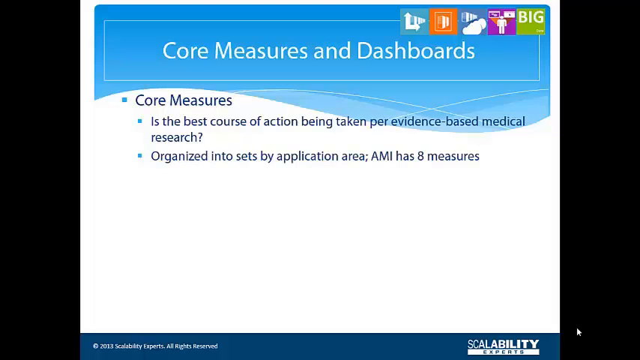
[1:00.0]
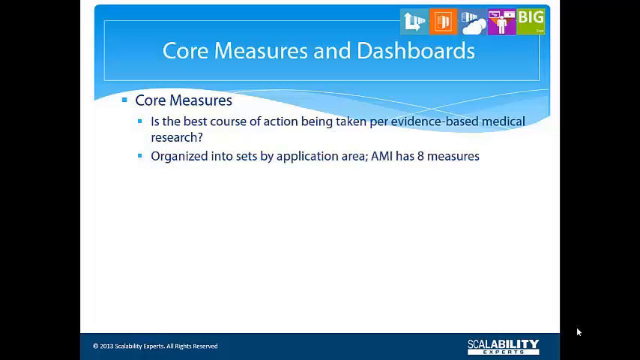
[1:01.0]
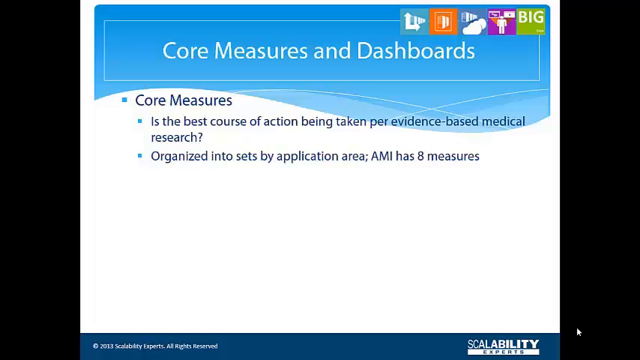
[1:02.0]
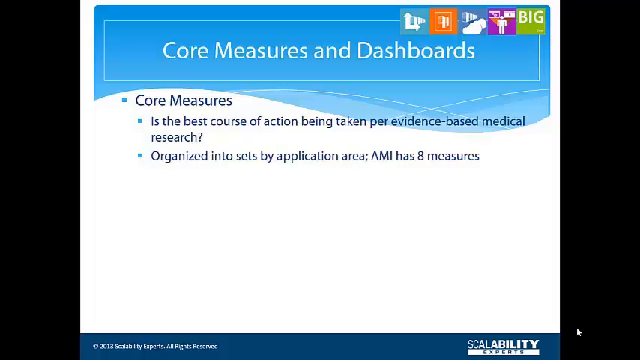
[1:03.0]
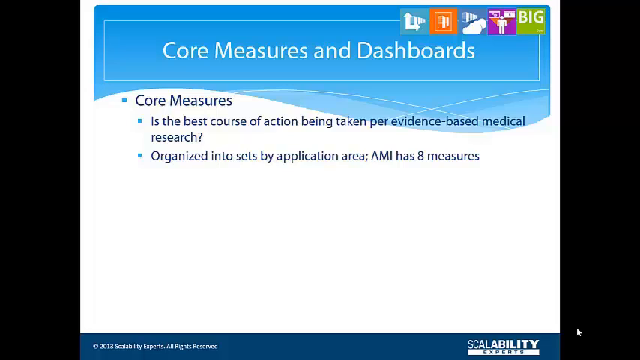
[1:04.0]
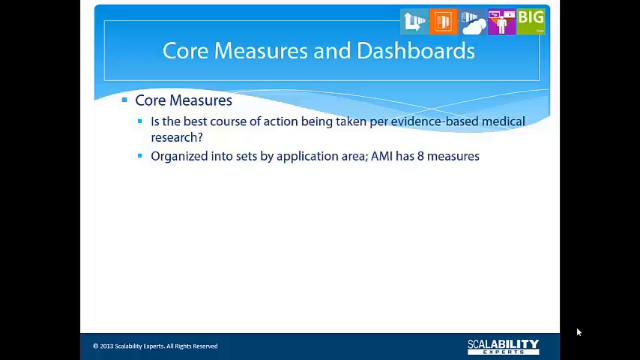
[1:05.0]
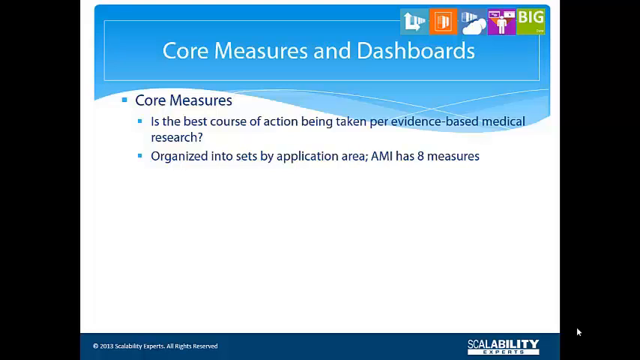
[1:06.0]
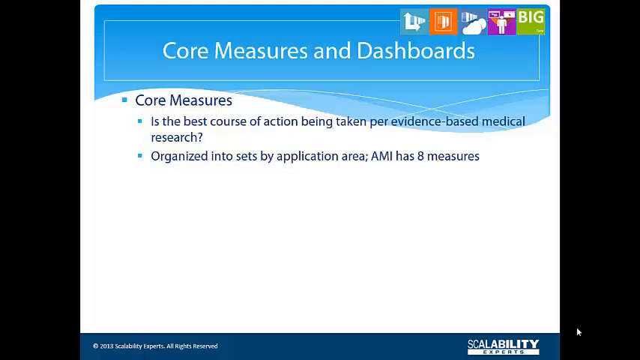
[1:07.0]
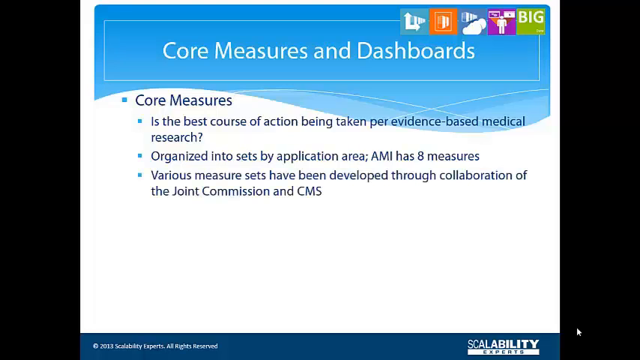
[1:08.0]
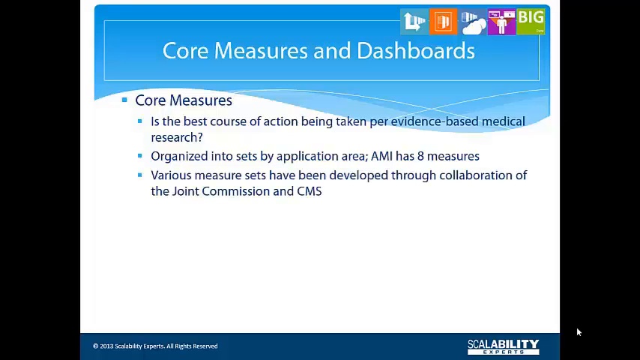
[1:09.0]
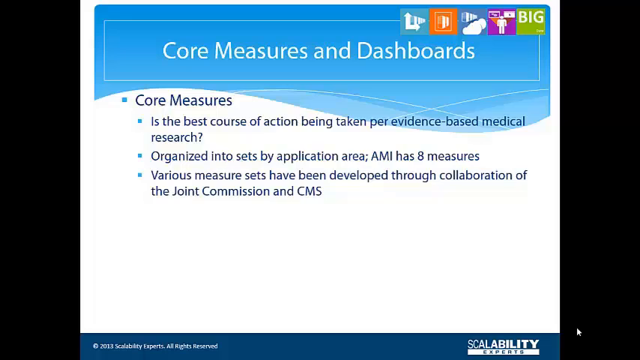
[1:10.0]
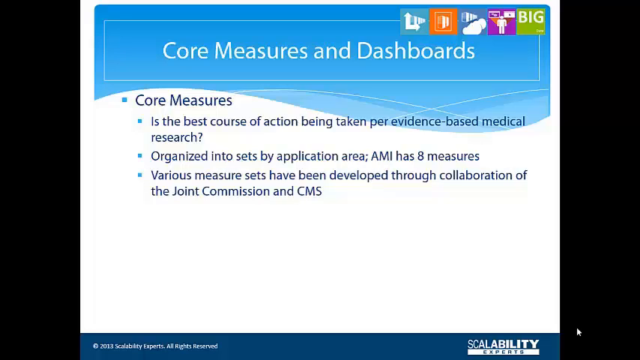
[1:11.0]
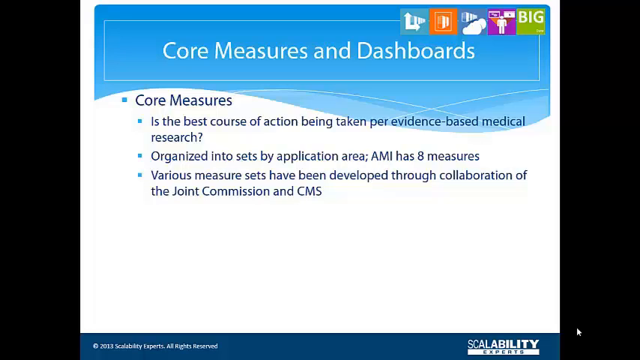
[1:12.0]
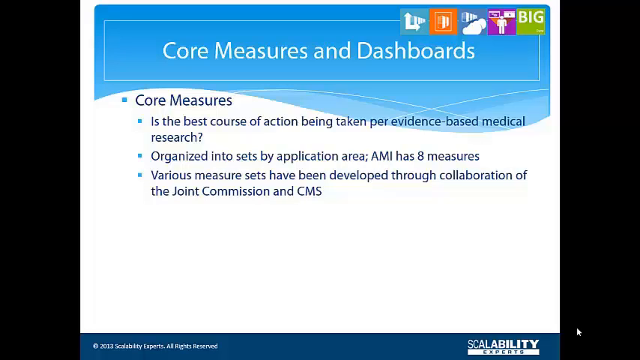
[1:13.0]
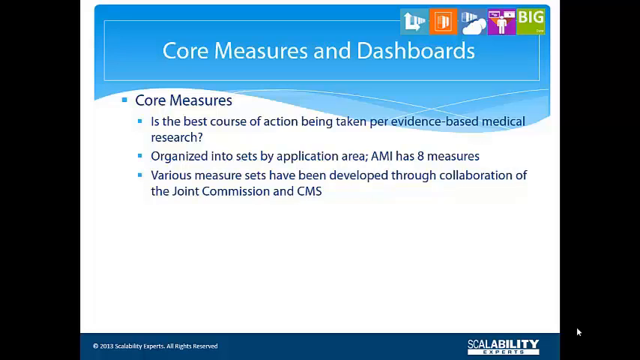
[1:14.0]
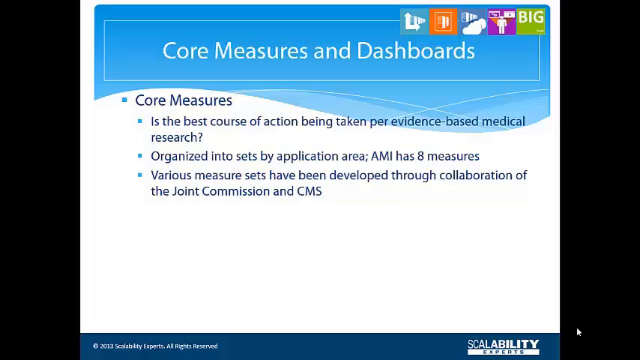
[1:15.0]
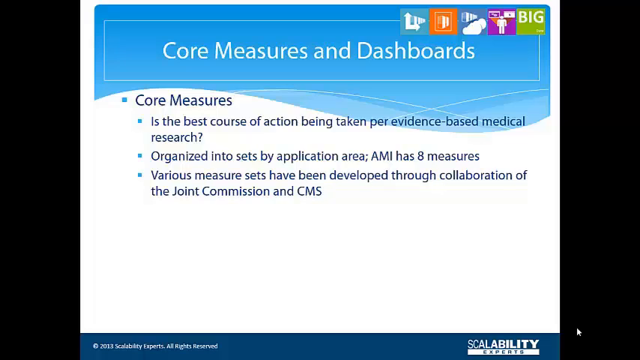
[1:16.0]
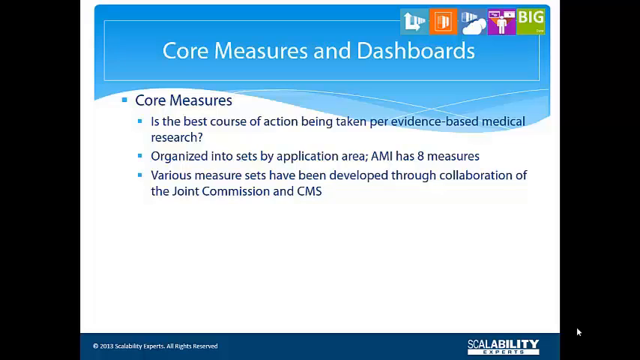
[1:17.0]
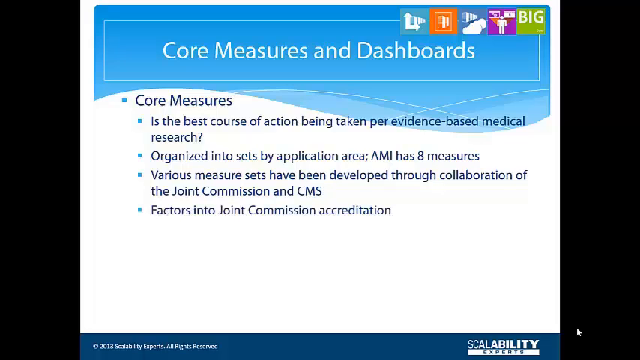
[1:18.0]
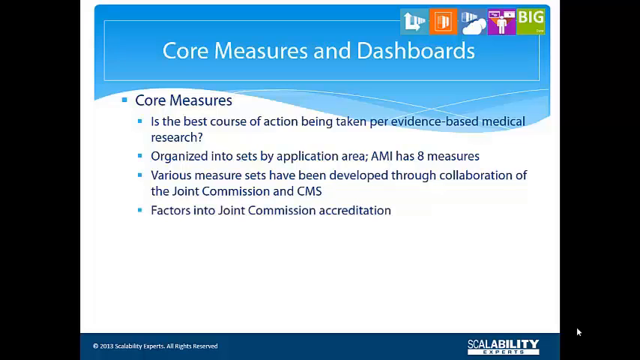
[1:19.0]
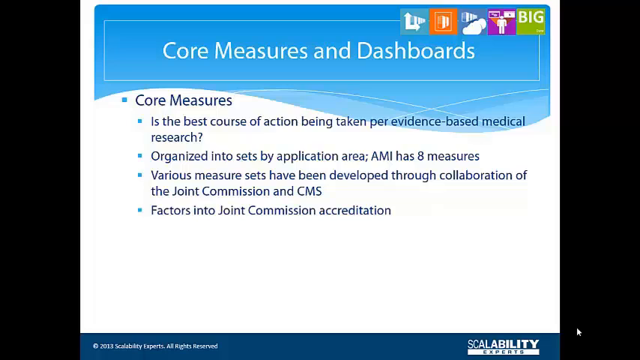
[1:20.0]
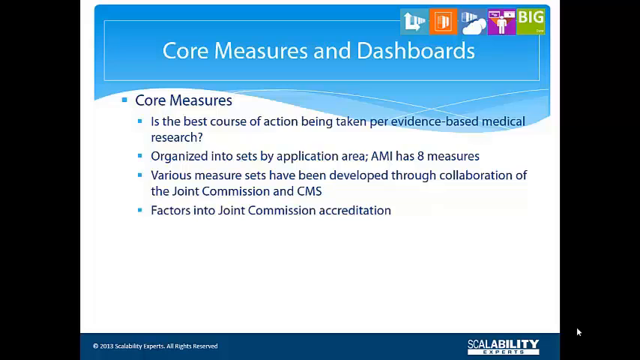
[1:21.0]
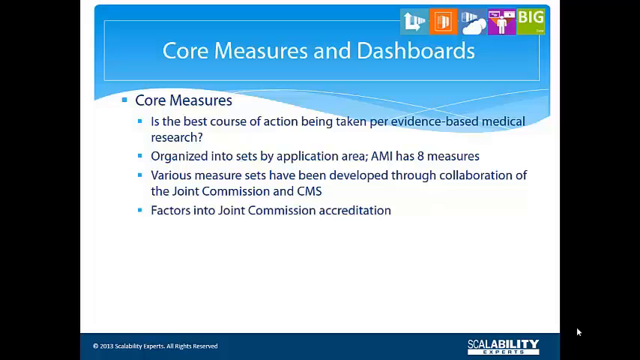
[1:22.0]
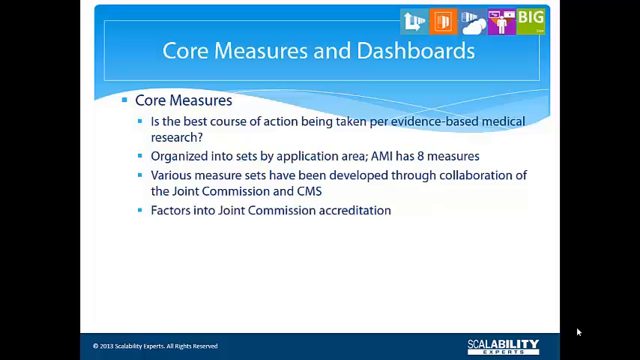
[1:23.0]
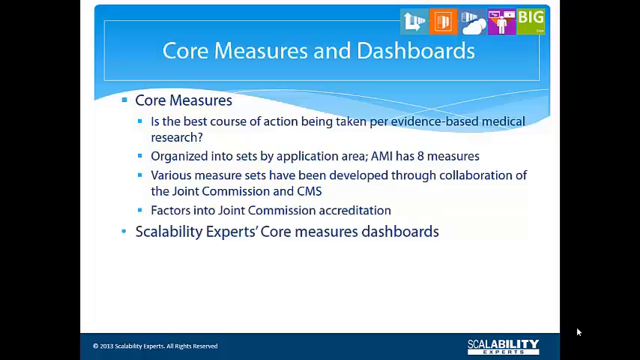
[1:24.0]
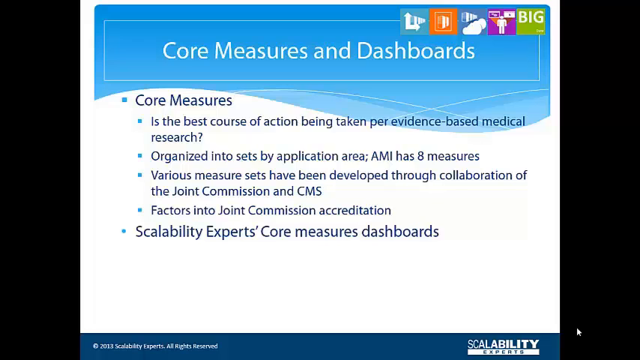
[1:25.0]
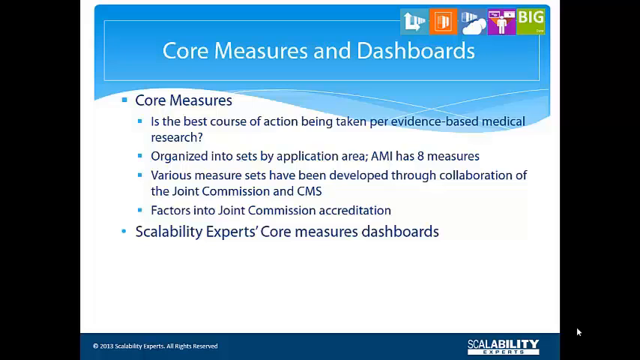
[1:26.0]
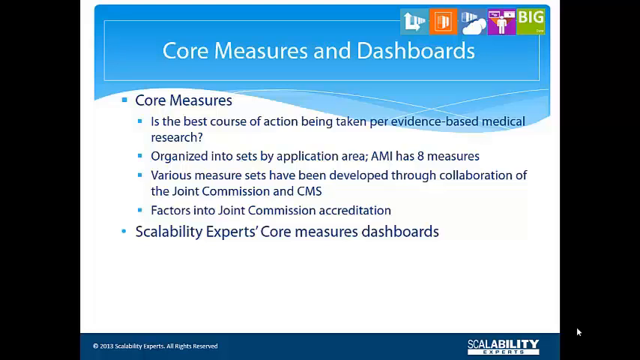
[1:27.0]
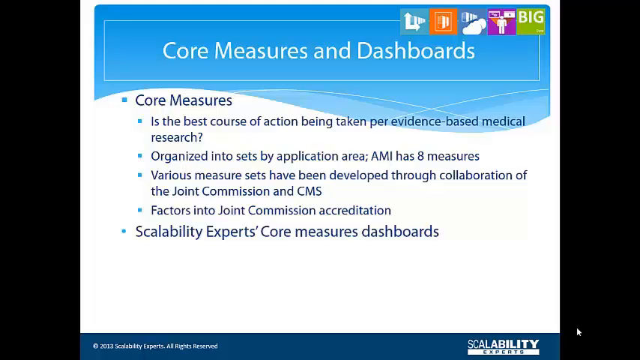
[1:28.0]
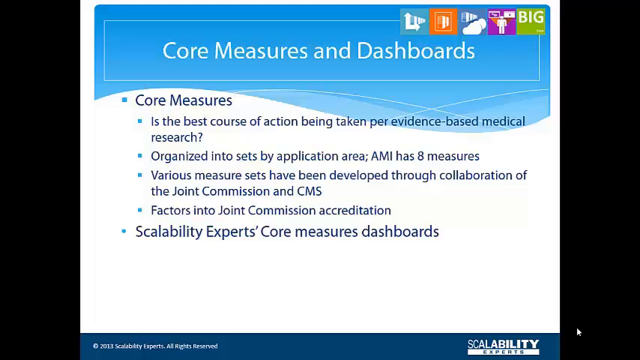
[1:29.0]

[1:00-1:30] Another slide appears in the same setup. The title board reads "Core measures and dashboard", and the writing beneath it is much briefer: a subject heading, "Core measures", with two bullet points underneath. The first reads "Is the best course of action being taken for evidence-based medical research?" and the second reads "Organized into sets by application area; AMI has eight measures". The writing is mostly on a white background. The title dialog box is not totally rectangular: moving from left to right, it extends beyond its rectangular shape and dips down into a curved area that continues for the rest of the box. The dialog box is entirely blue, with white writing inside it.